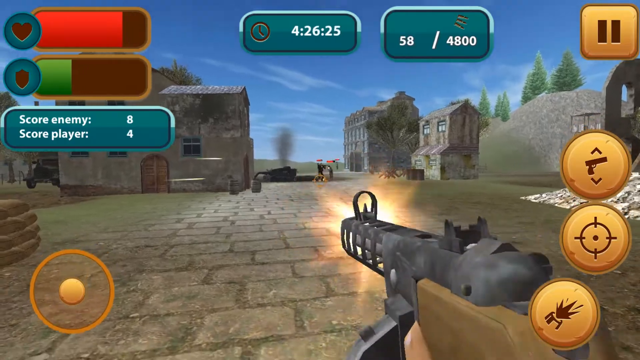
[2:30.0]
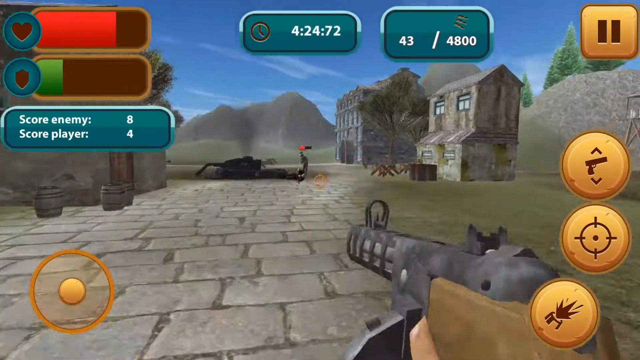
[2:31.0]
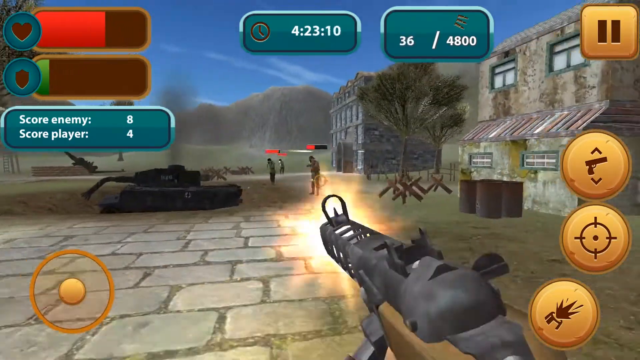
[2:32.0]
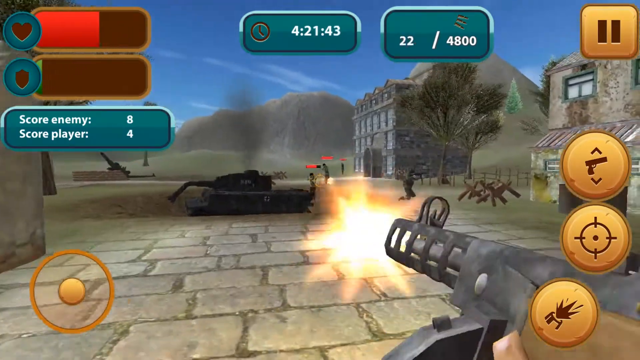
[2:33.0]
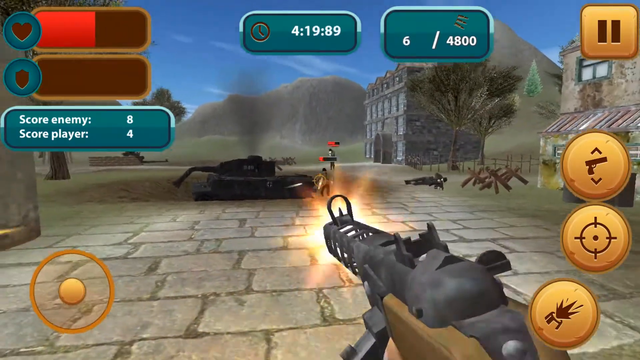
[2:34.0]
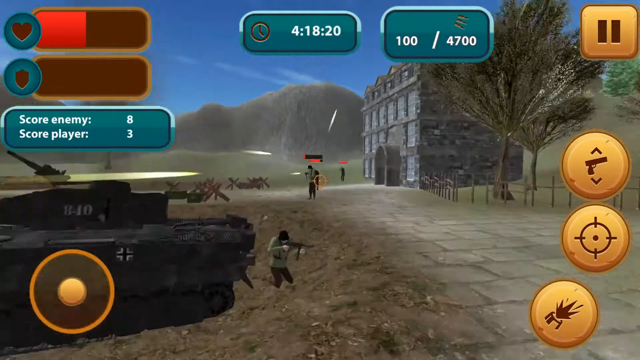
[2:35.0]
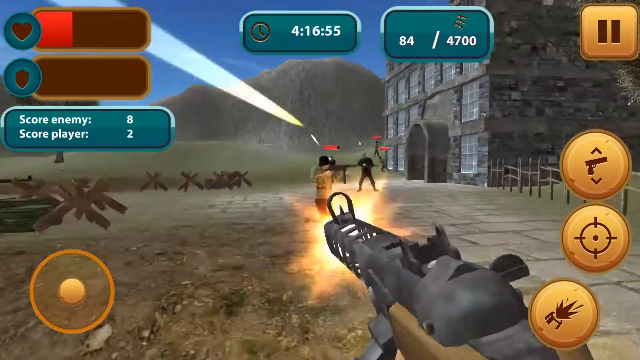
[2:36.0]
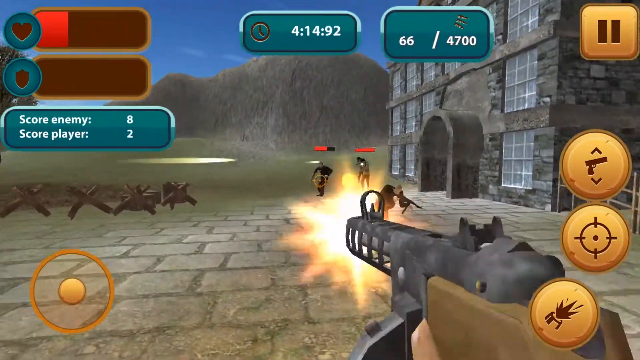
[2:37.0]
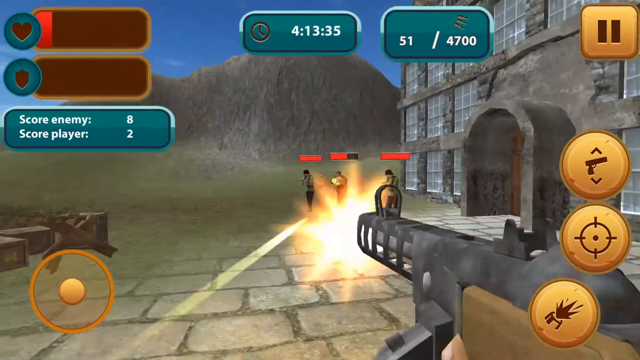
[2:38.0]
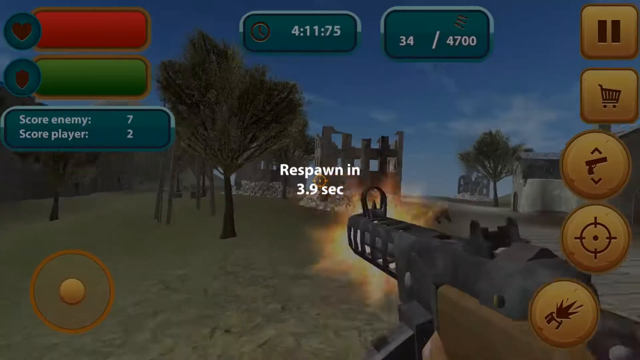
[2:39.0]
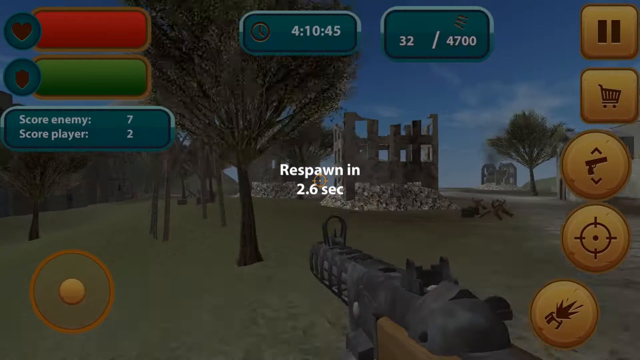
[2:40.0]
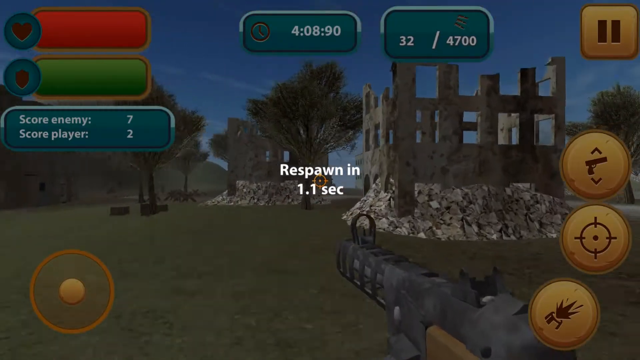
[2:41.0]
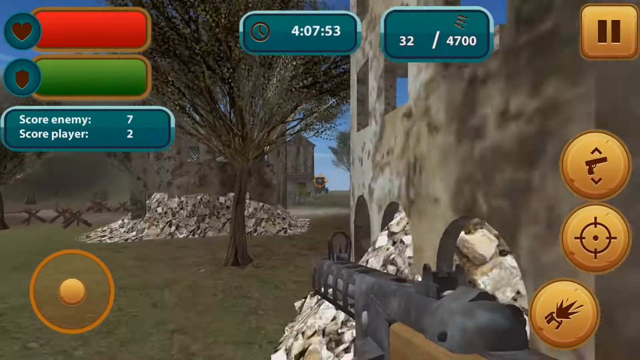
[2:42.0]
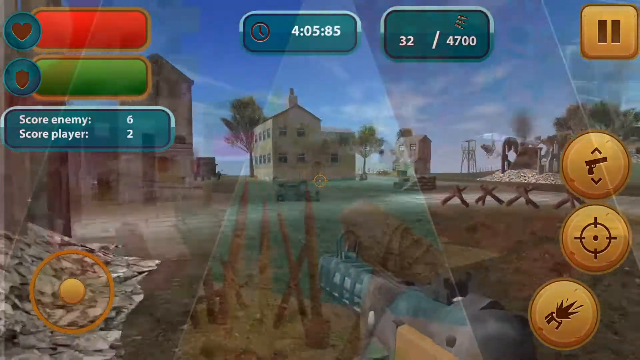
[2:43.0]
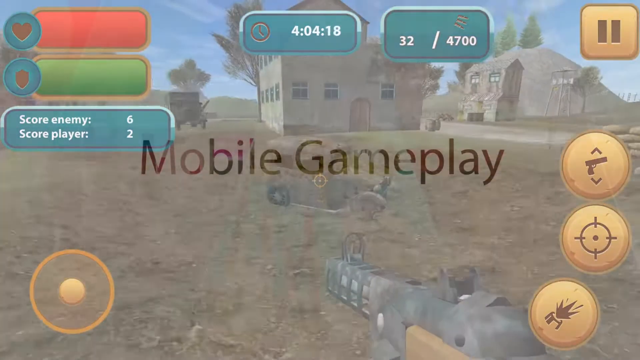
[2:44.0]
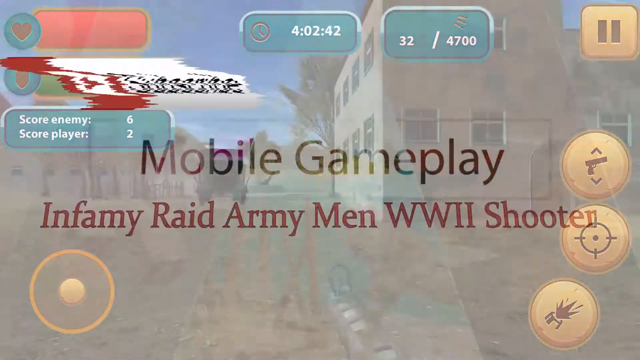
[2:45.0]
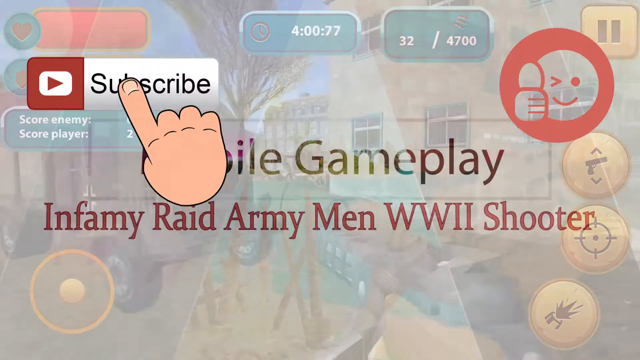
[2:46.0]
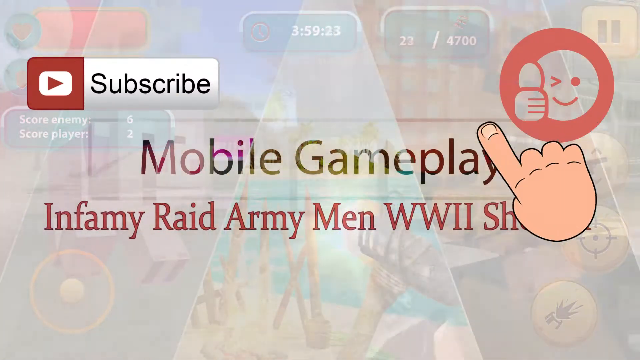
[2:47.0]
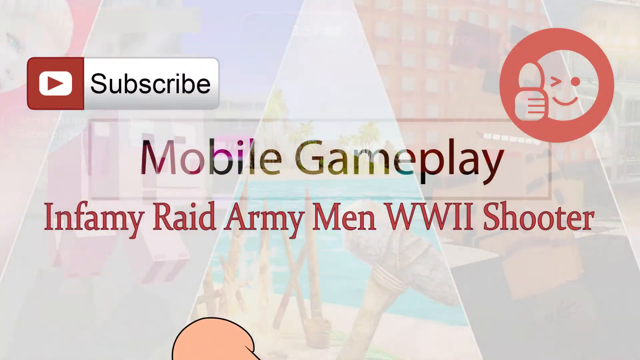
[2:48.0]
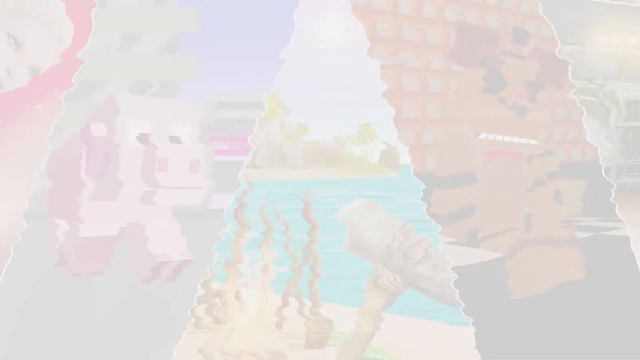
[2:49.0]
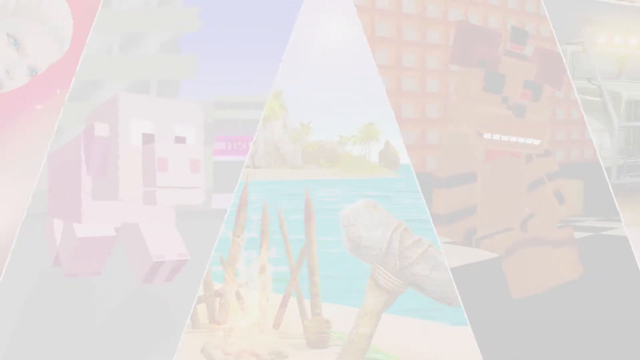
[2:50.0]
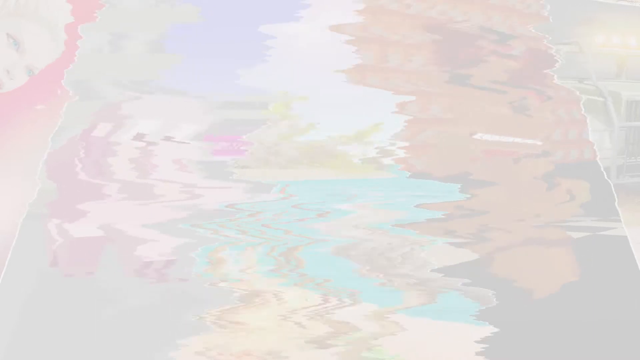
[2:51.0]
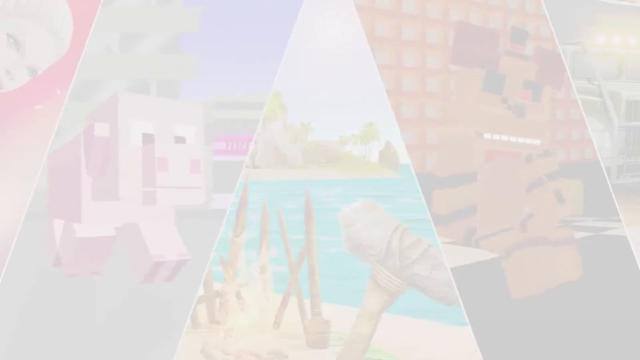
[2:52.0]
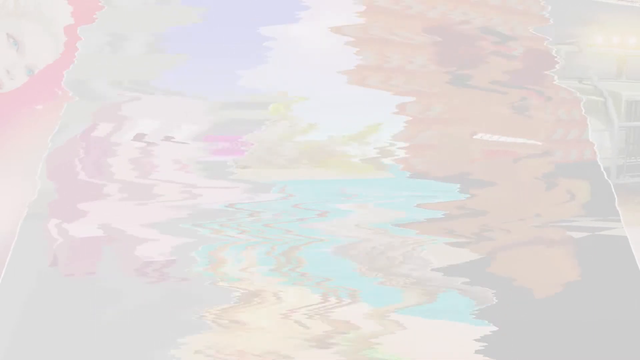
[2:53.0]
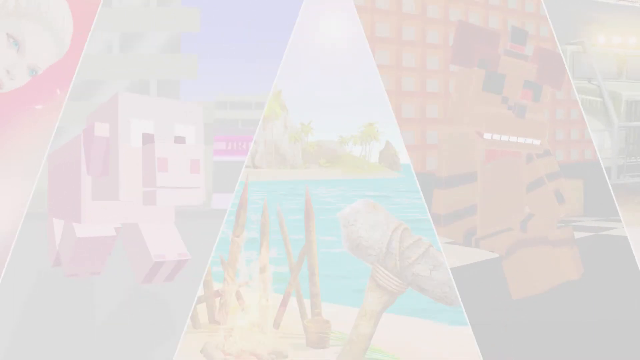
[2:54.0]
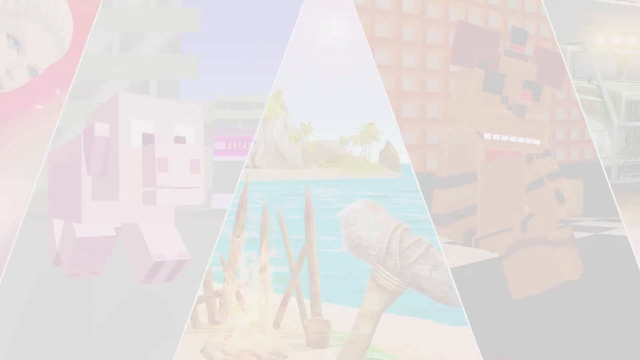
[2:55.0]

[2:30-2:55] The protagonist appears to go past the broken-down German Panzer tank once again, rushing in with a PP-40 and shooting down many enemies, one of whom appears to be an officer based on his darker uniform. More tank traps are littered around than before. Enemy spawn points are shown again at mostly intact buildings, but the enemies appear to spawn from behind the building rather than from it. The game name is shown, apparently "Infamy Raid Army Men WWII Shooter", and the video ends on what appears to be a sort of blank image.